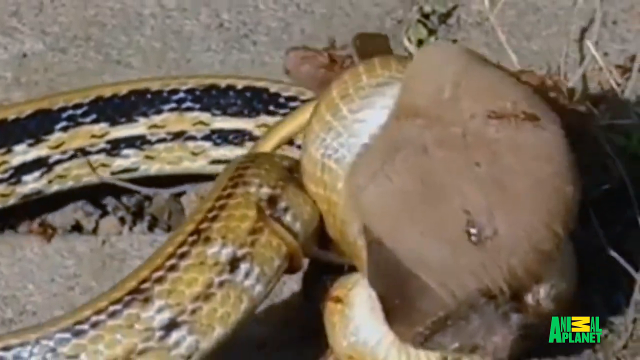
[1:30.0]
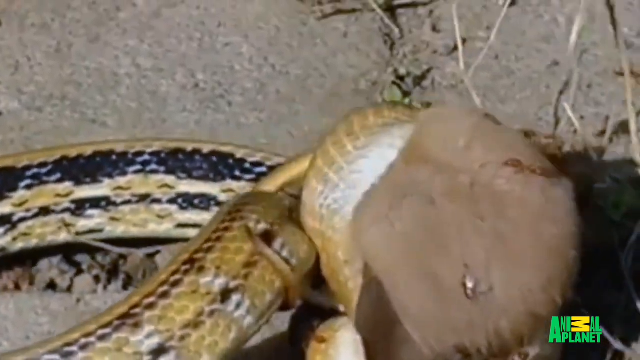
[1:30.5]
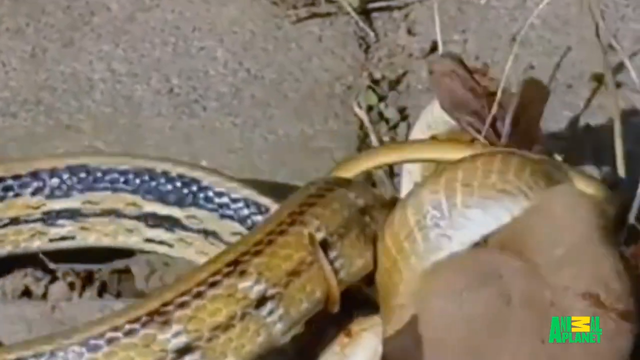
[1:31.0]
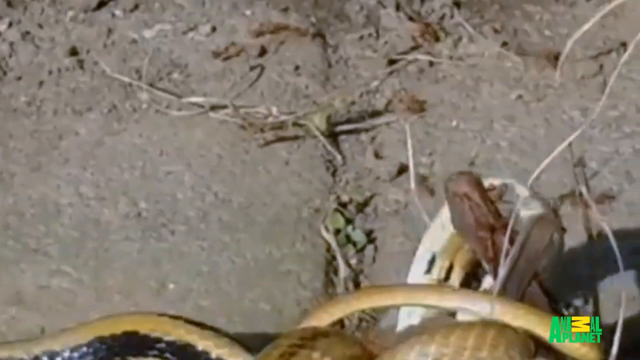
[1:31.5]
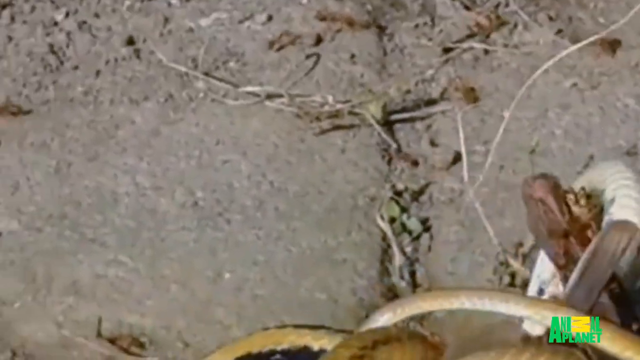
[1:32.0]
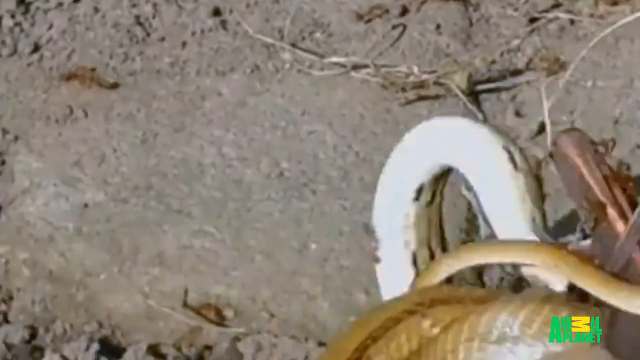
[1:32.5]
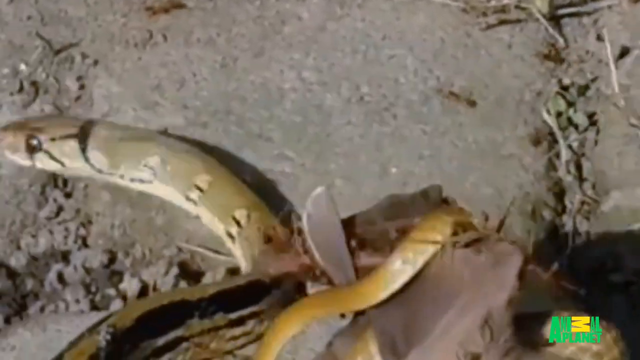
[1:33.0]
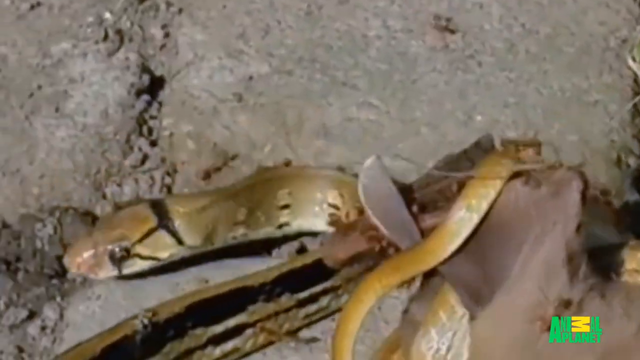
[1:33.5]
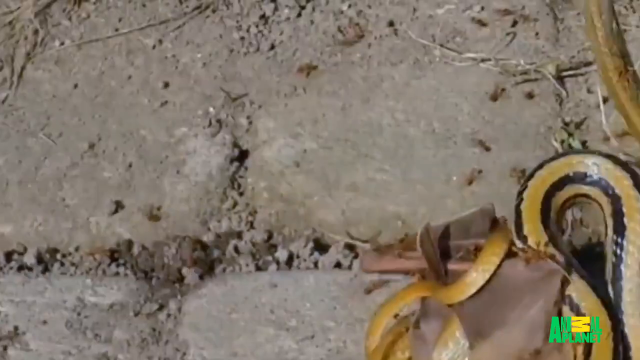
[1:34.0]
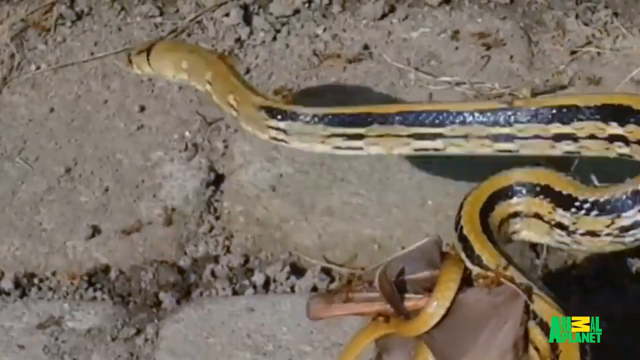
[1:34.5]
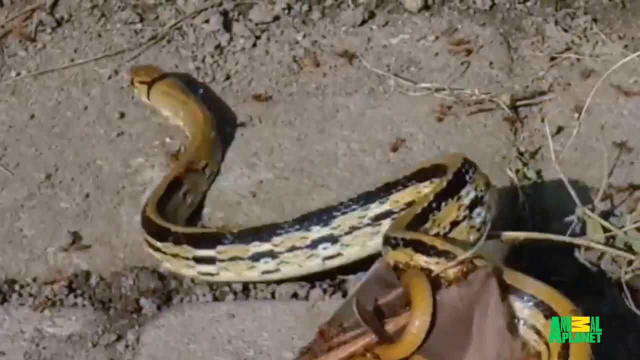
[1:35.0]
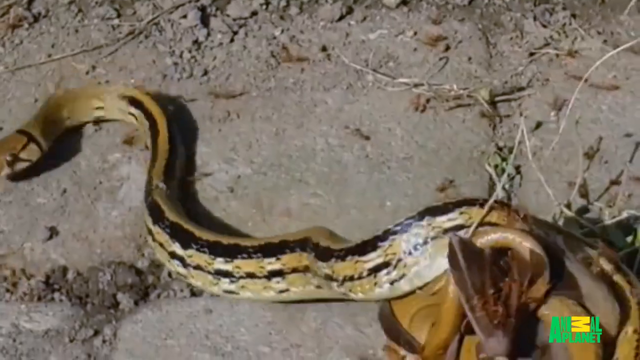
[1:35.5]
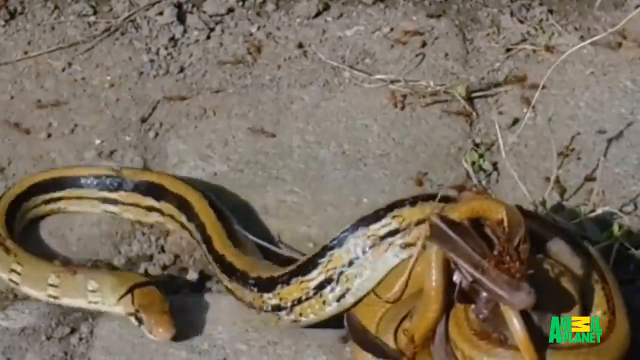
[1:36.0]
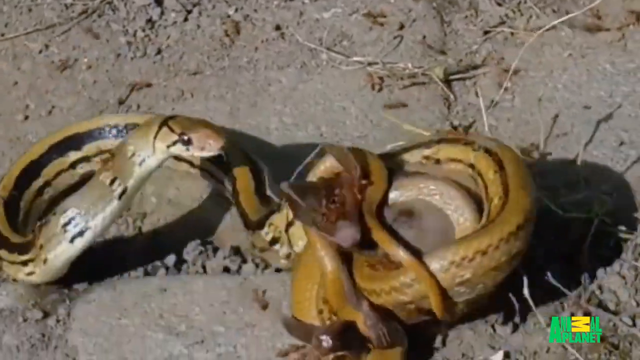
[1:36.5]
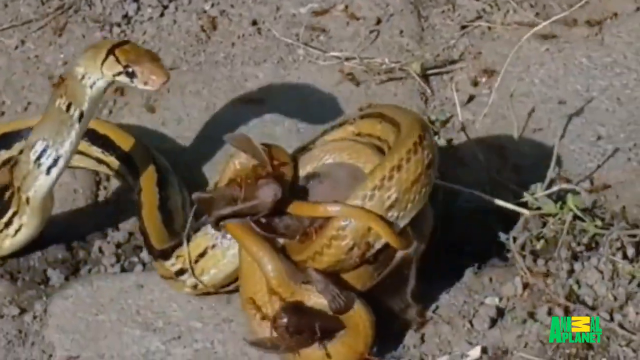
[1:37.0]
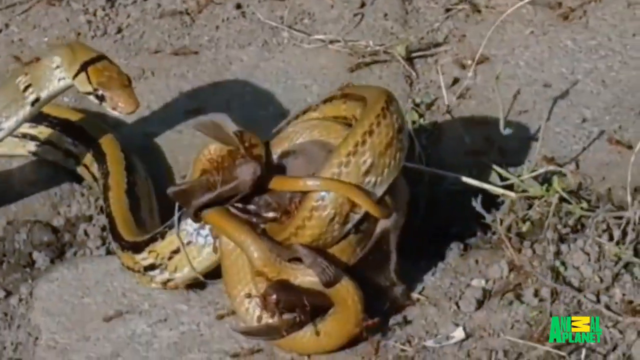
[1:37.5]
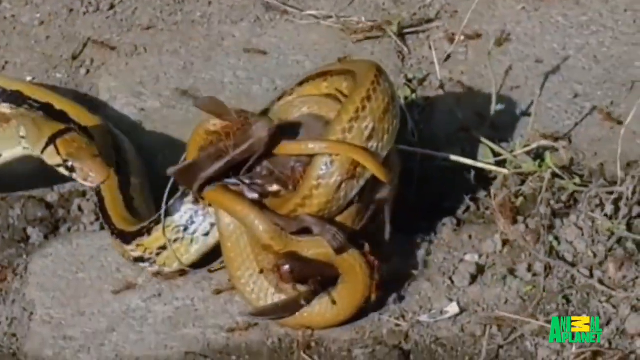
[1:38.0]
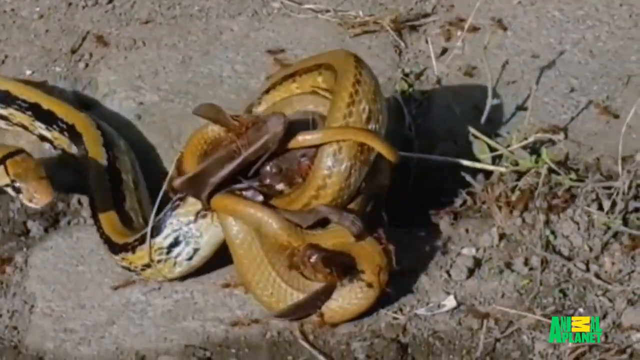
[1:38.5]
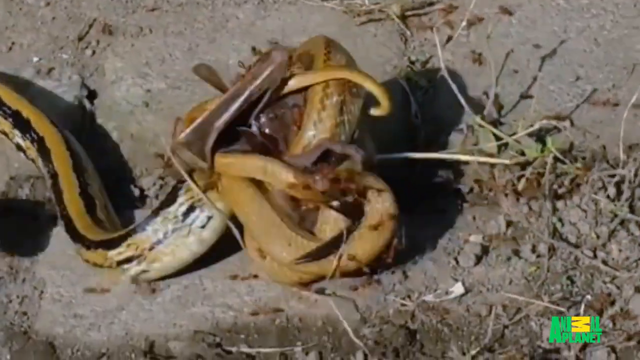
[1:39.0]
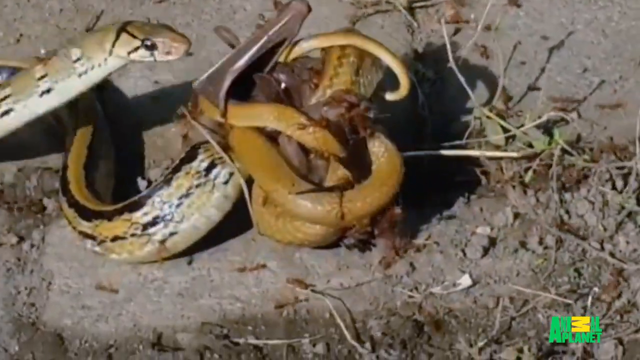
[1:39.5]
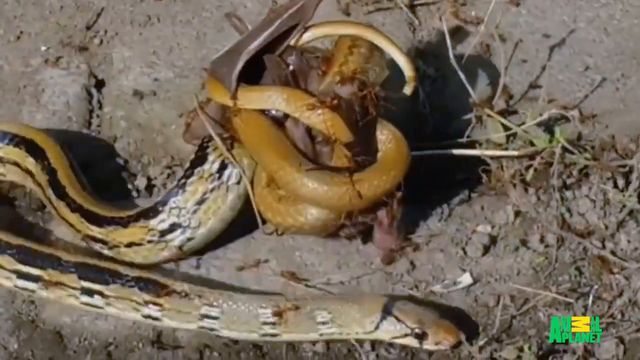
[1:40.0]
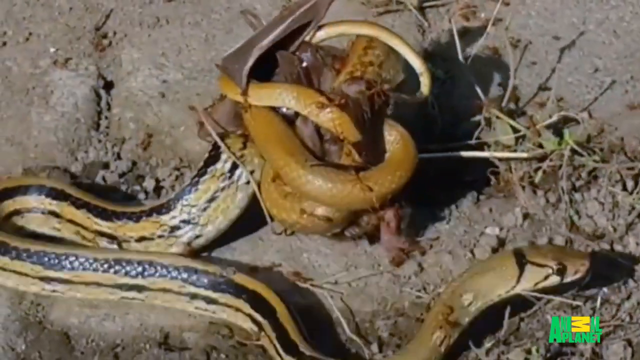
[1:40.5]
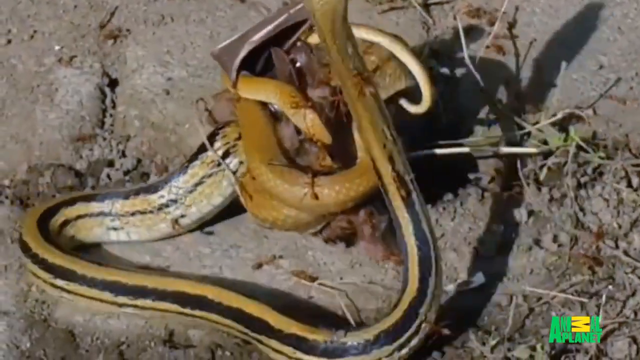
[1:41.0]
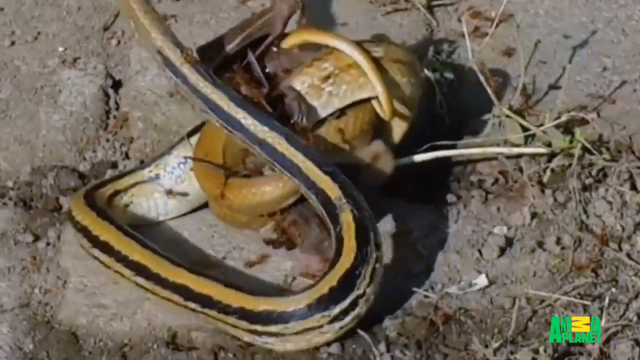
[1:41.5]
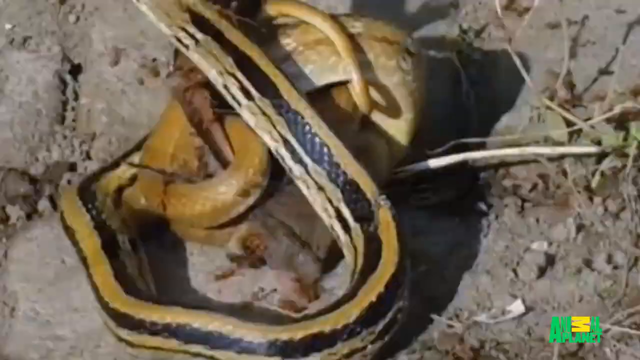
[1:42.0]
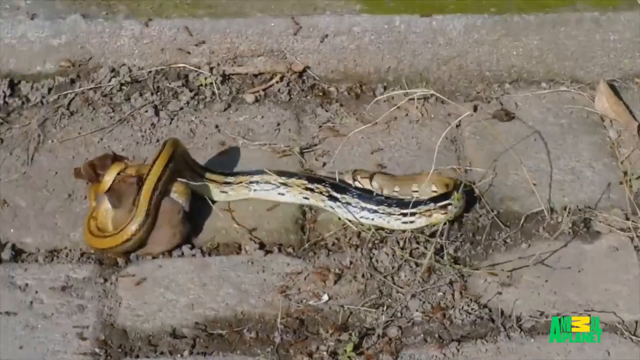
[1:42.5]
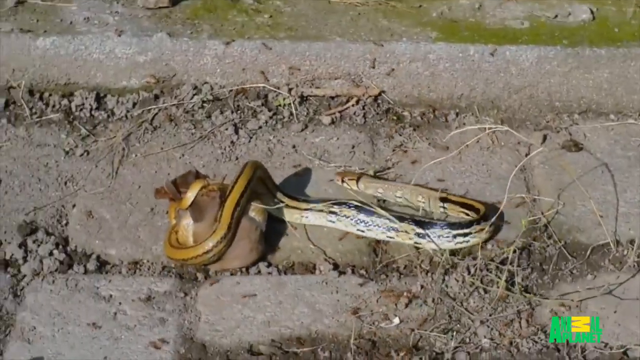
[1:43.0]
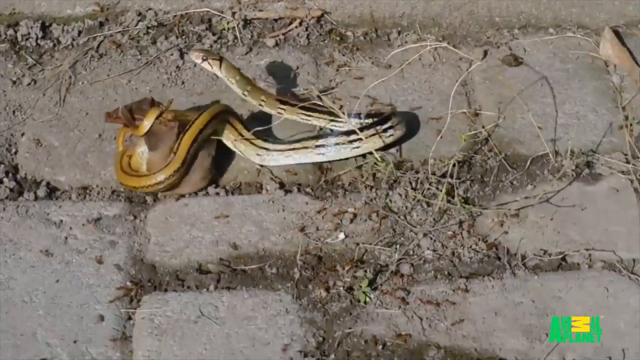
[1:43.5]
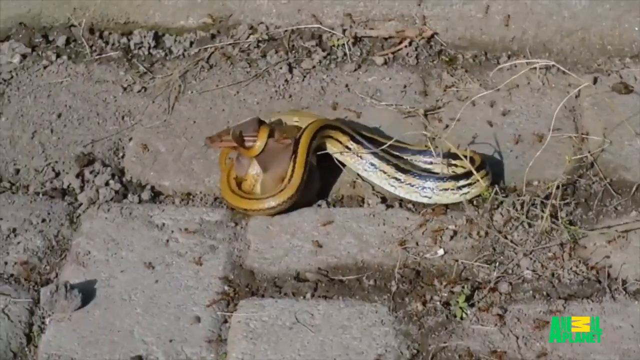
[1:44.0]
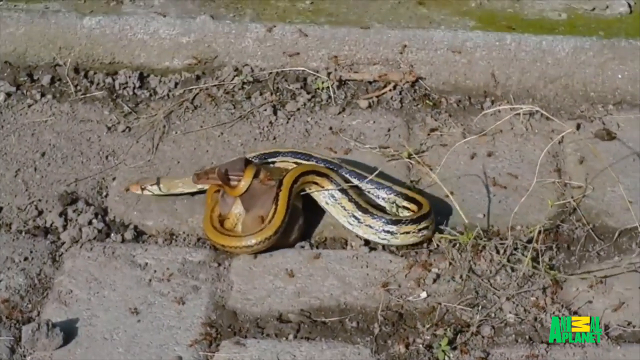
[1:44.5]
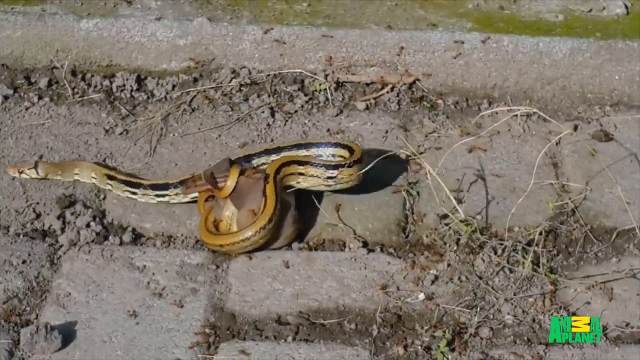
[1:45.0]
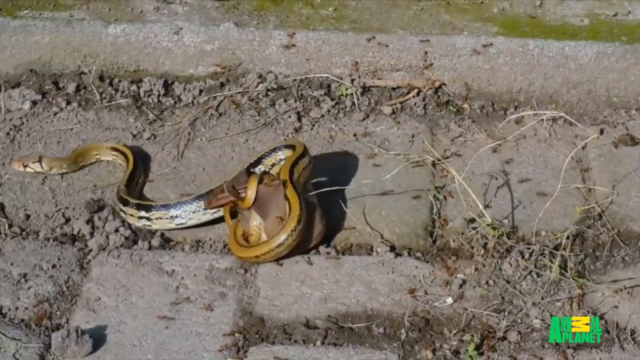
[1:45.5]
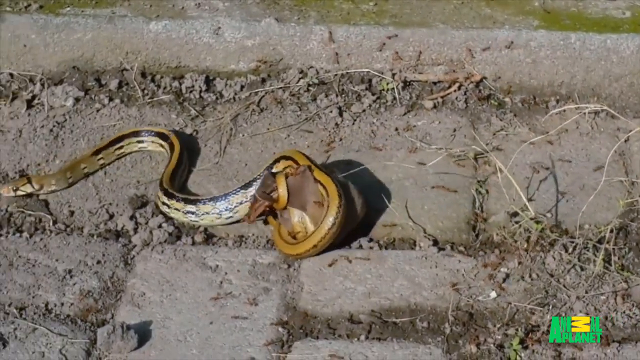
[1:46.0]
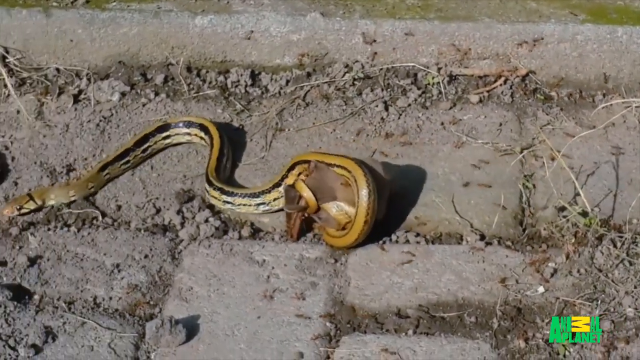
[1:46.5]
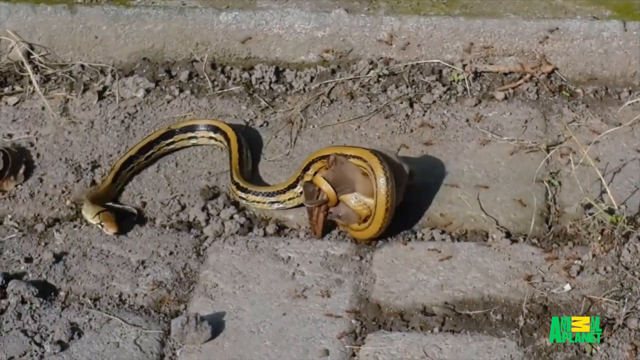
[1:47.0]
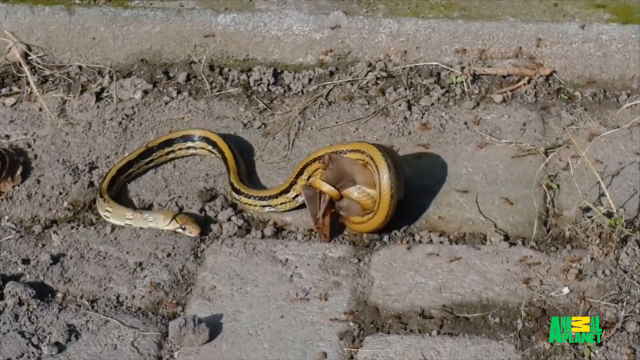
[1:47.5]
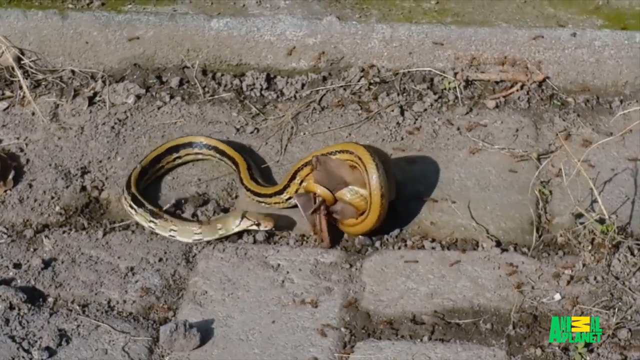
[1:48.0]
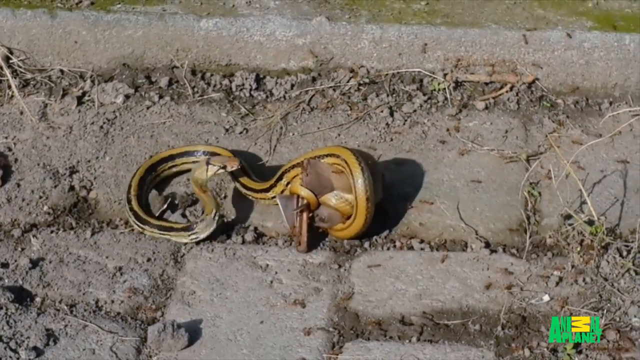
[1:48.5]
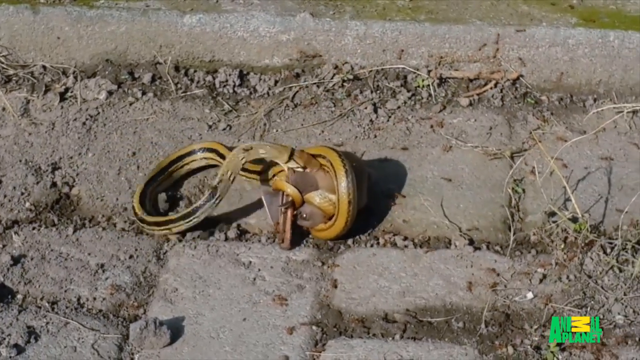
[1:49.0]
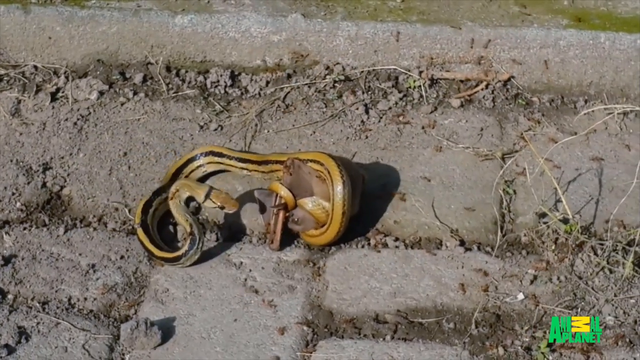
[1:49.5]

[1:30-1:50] A snake with a slender head does not appear to be poisonous and appears to be a constrictor type. It is tan or possibly light yellow, with a white belly, black markings running along the length of its body, and some black dots. It has a bat constricted, wrapped up around it, and tons of copper to honey-colored ants crawl all over the bat. This all takes place on a brick floor. This is on the Animal Planet network, and the Animal Planet logo is bright green with yellow accents.